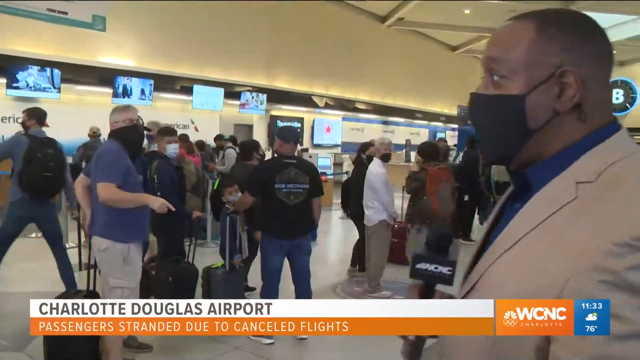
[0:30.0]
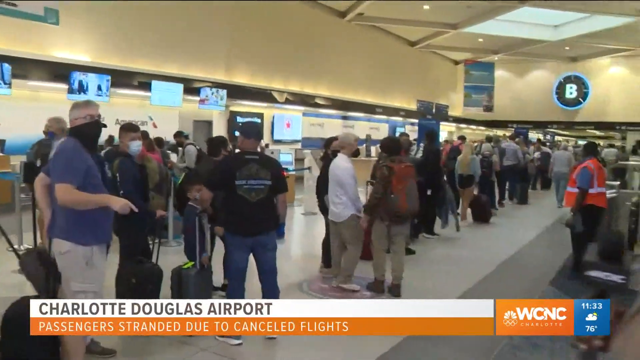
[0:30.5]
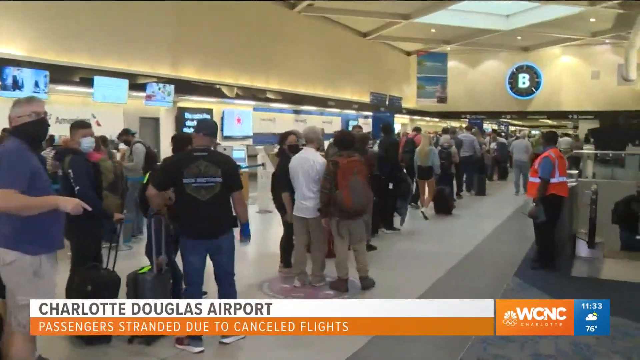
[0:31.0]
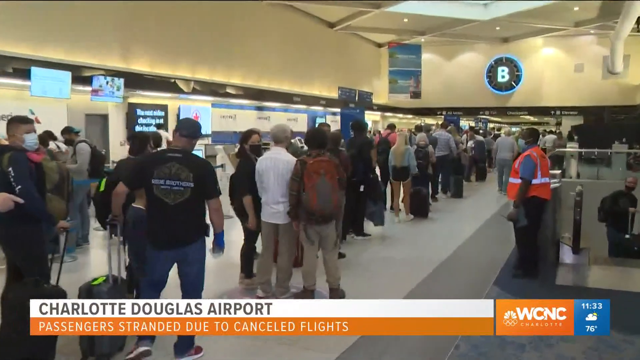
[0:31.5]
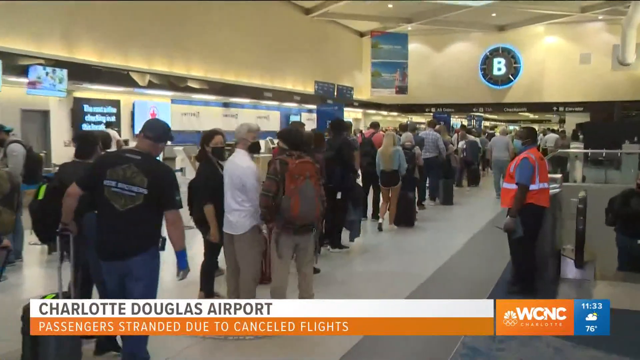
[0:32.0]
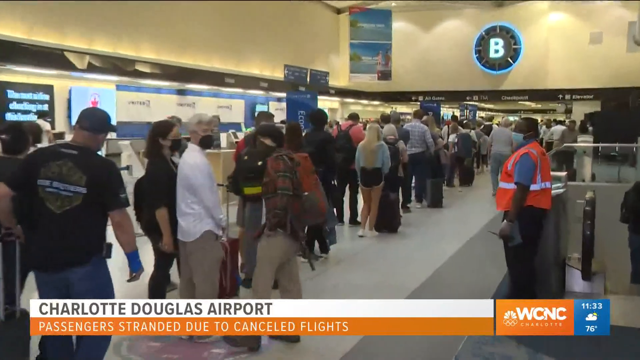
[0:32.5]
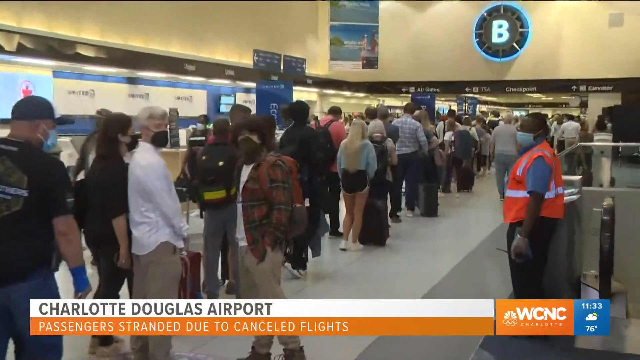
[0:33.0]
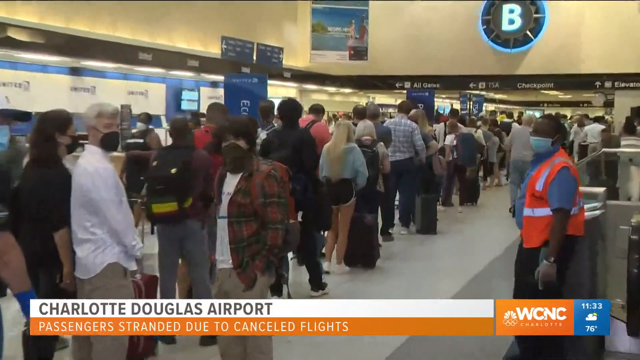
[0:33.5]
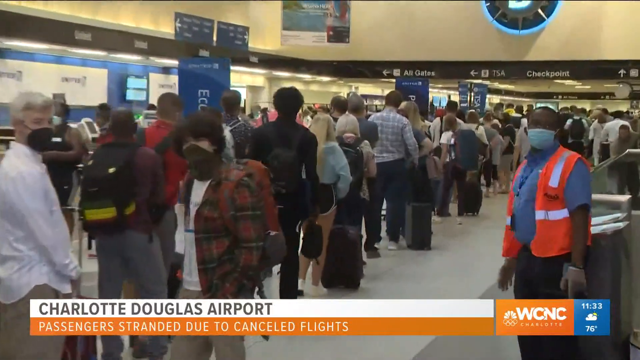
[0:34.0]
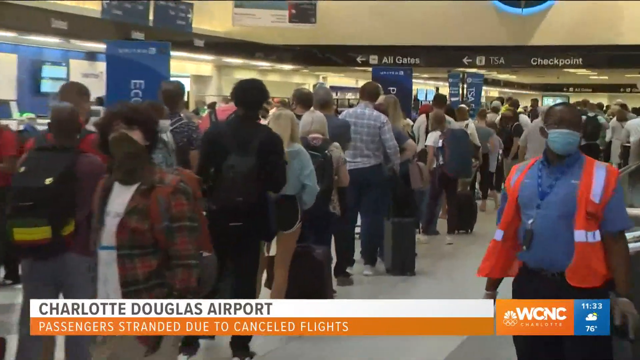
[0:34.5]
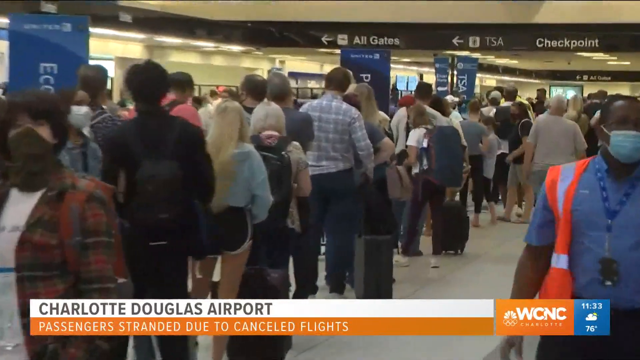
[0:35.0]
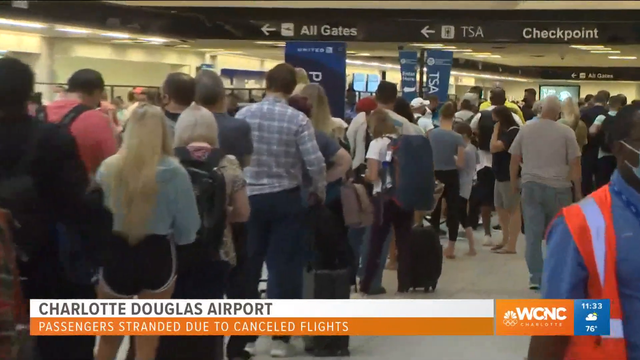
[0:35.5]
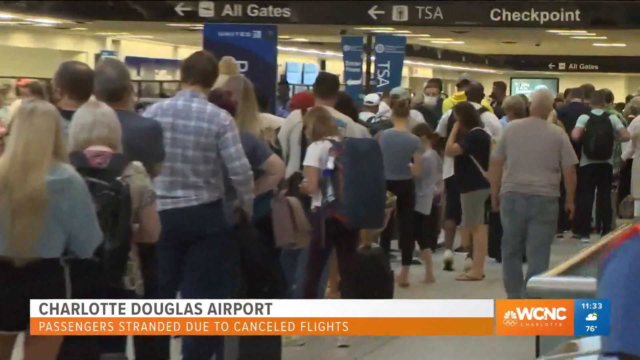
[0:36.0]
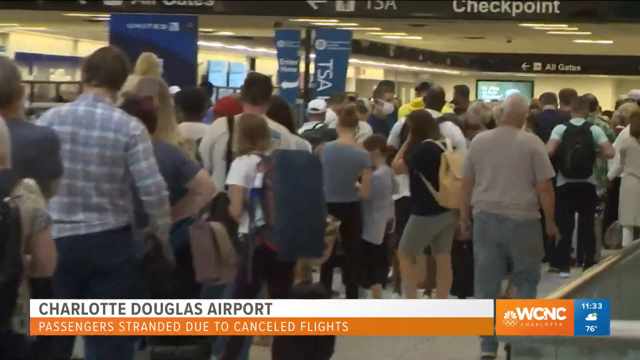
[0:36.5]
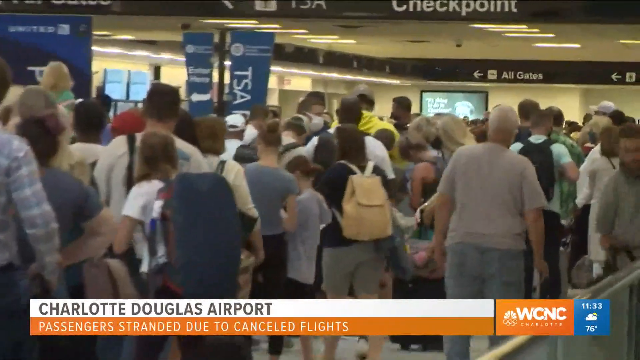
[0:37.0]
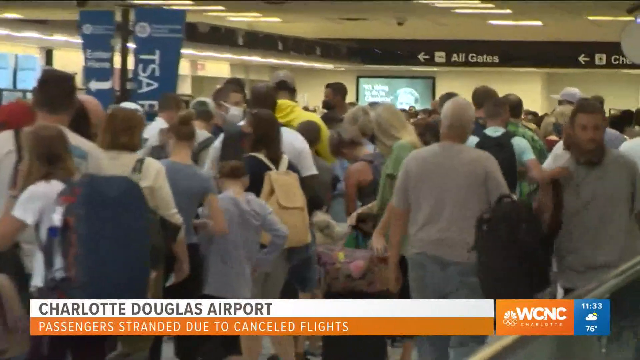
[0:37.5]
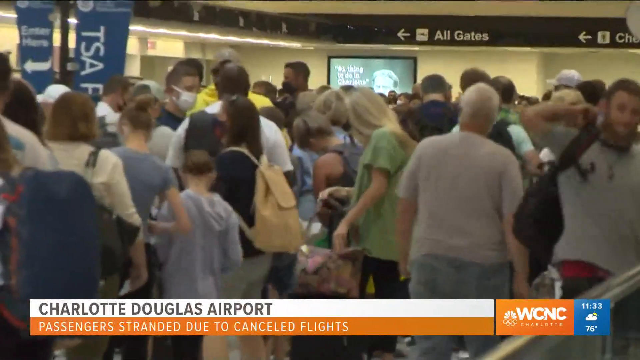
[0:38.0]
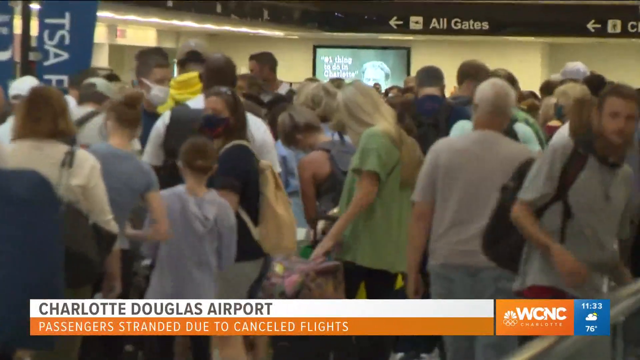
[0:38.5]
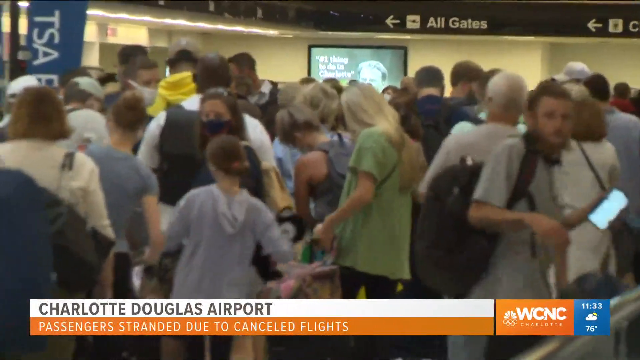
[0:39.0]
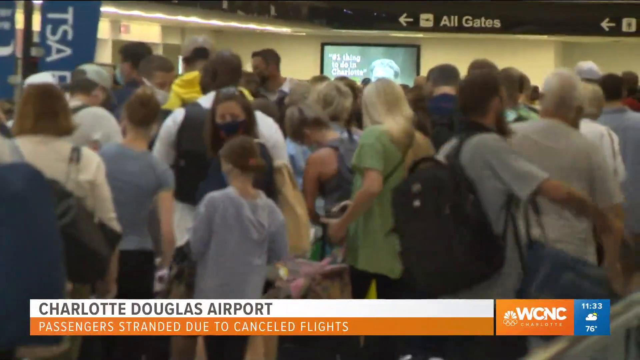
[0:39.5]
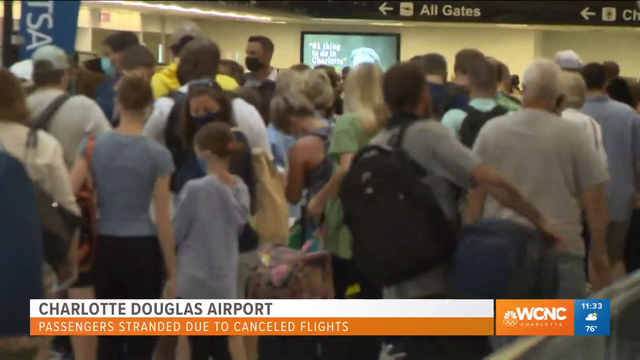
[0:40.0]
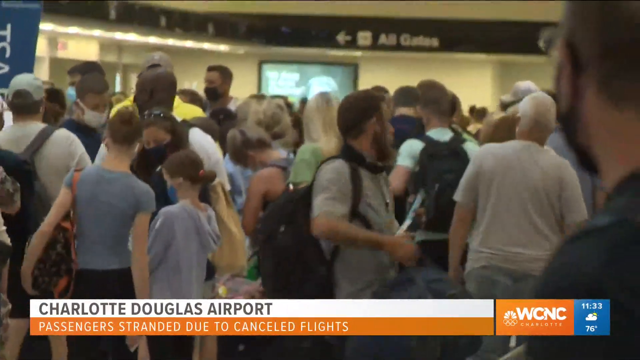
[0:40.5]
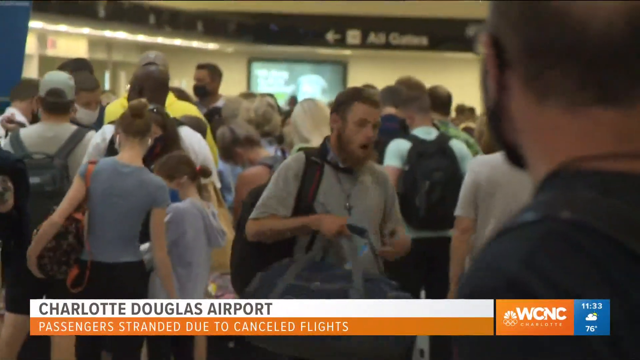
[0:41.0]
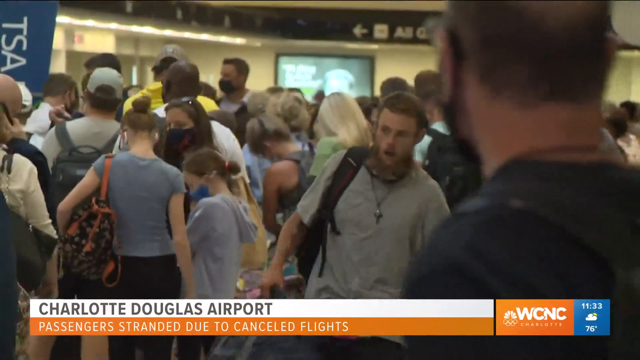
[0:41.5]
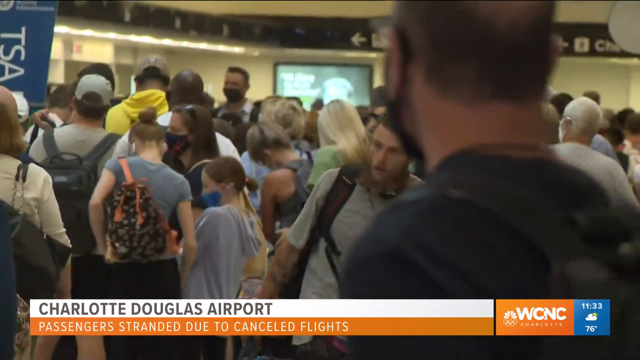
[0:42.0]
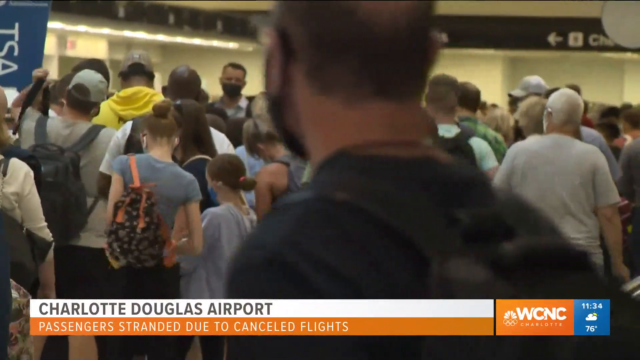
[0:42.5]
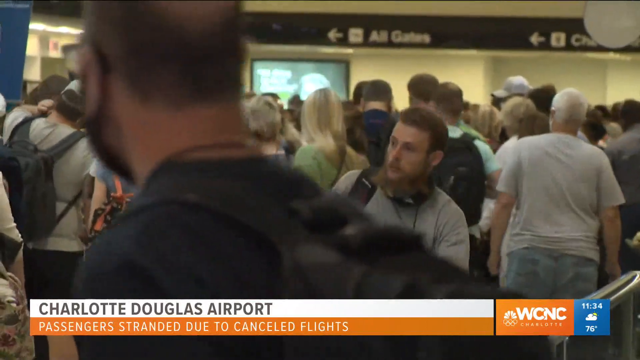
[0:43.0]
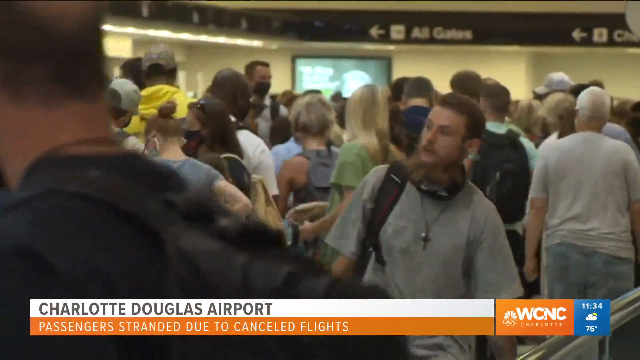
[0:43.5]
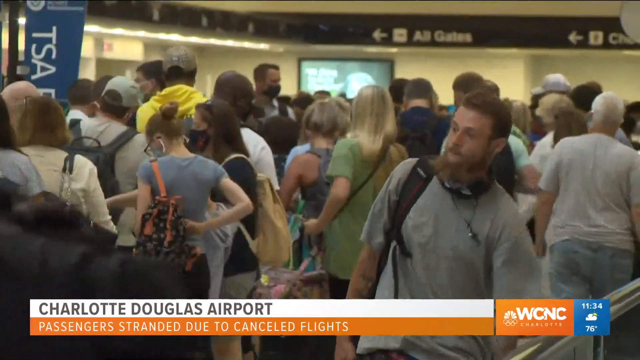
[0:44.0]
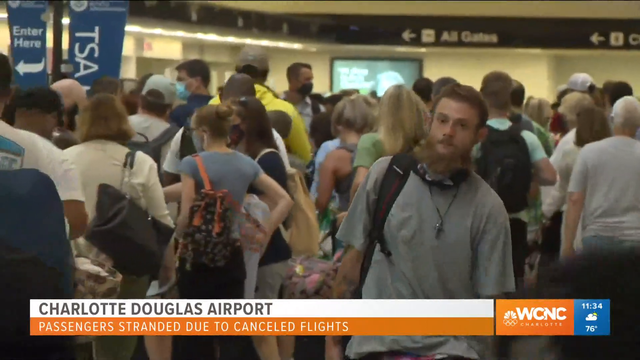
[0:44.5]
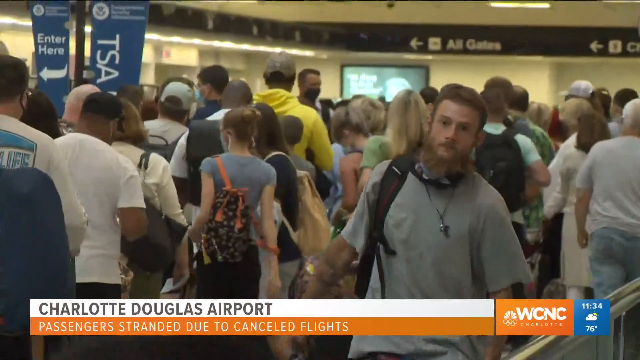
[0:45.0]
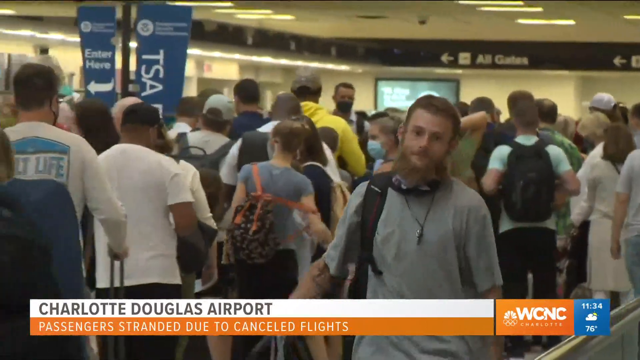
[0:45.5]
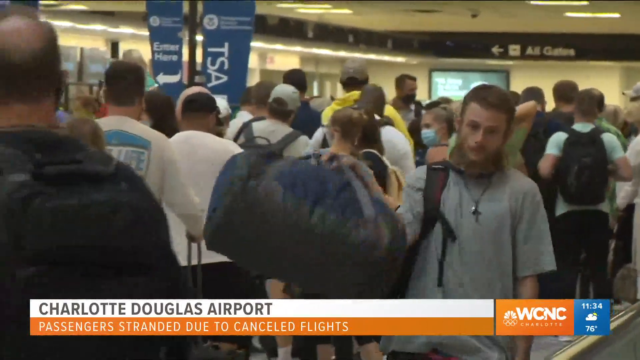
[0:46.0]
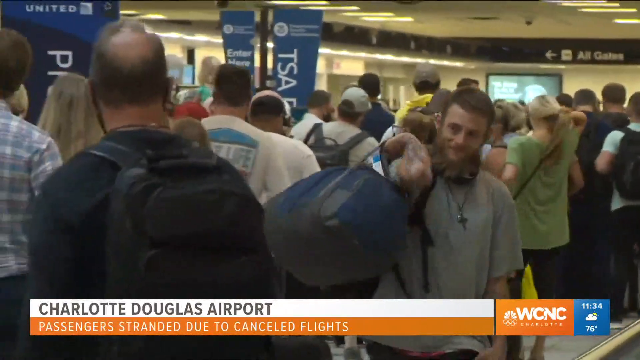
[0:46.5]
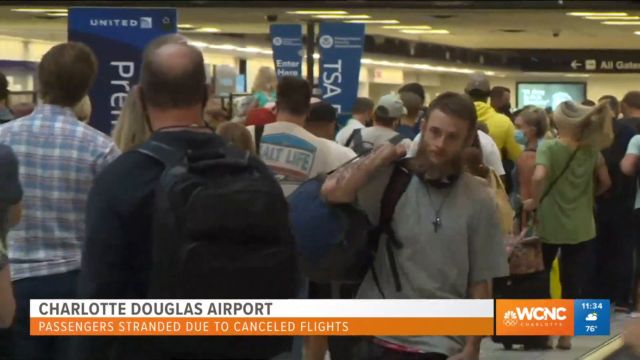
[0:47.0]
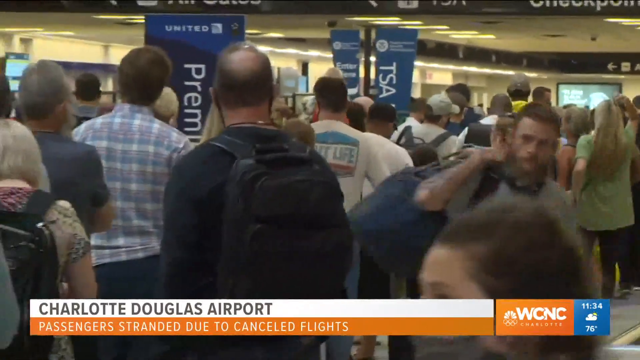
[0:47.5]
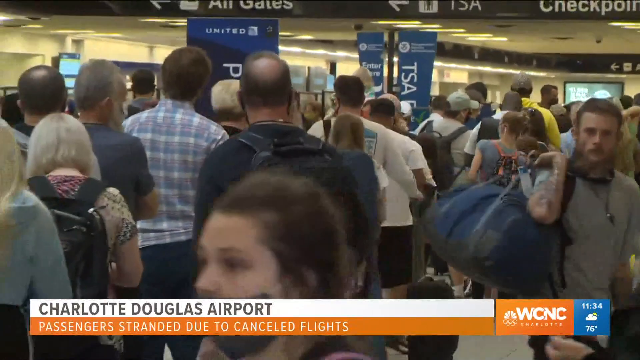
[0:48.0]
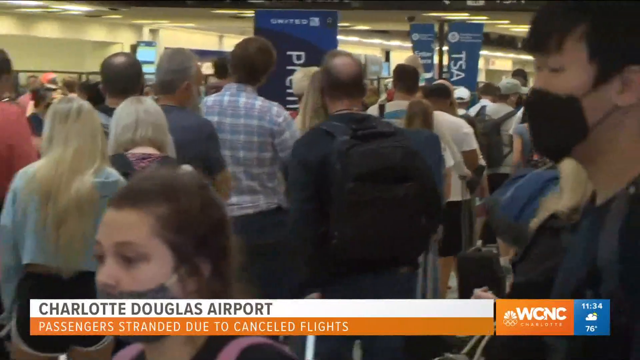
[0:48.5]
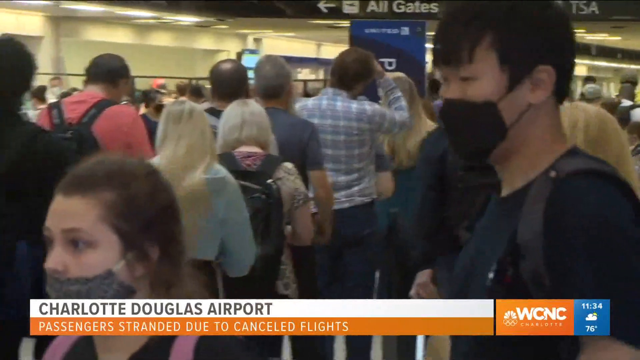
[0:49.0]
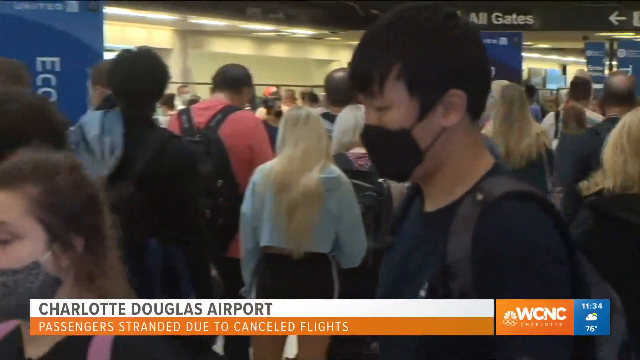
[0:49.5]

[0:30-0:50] The setting is an airport, and it is very crowded. Many people are waiting, and many are standing in line. Some people in the video are talking, and someone intervenes.